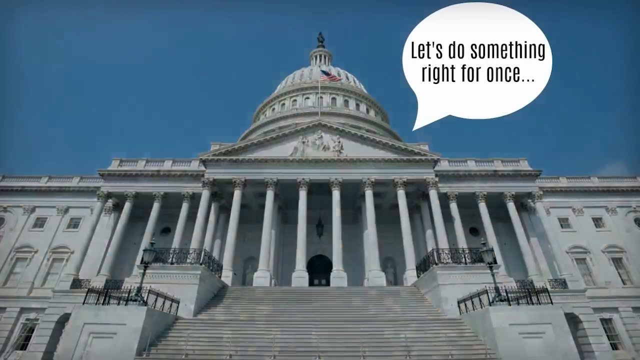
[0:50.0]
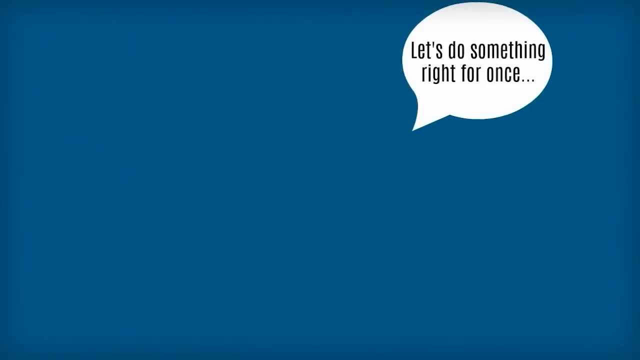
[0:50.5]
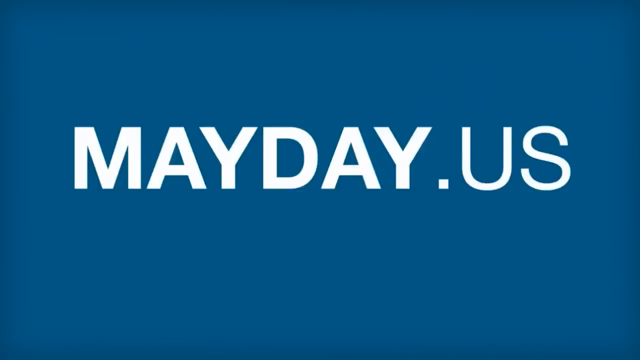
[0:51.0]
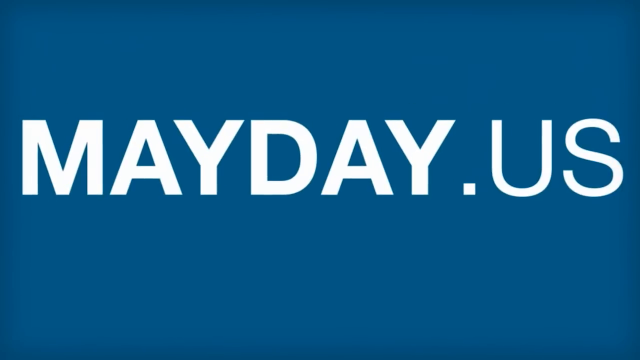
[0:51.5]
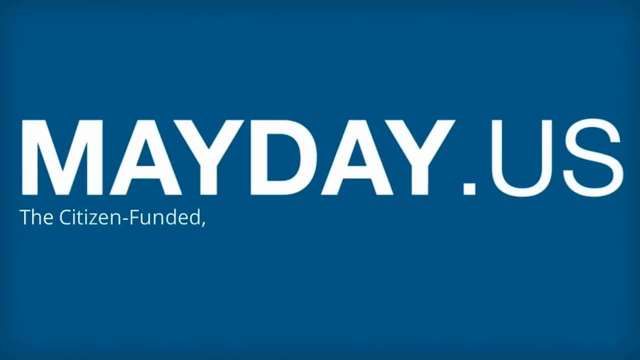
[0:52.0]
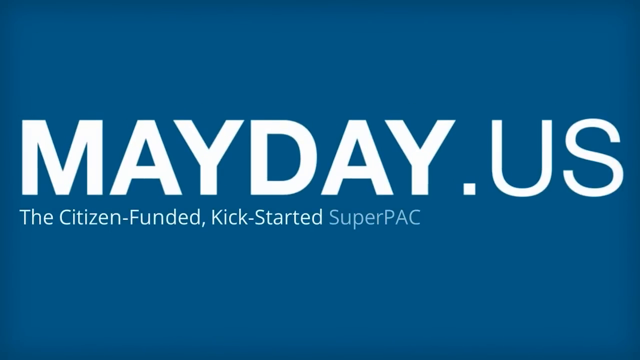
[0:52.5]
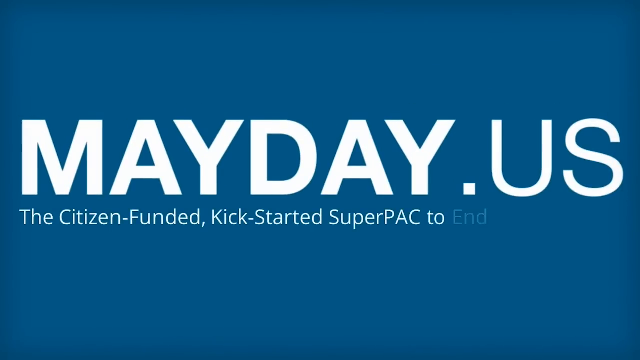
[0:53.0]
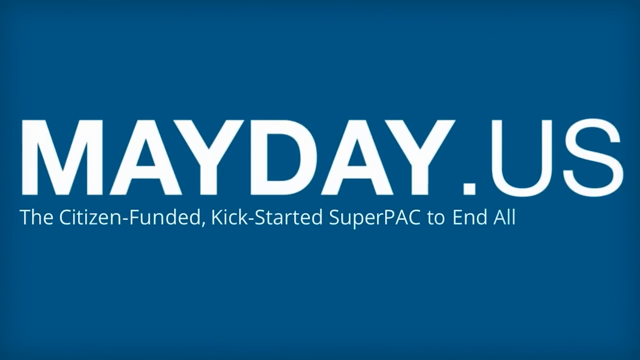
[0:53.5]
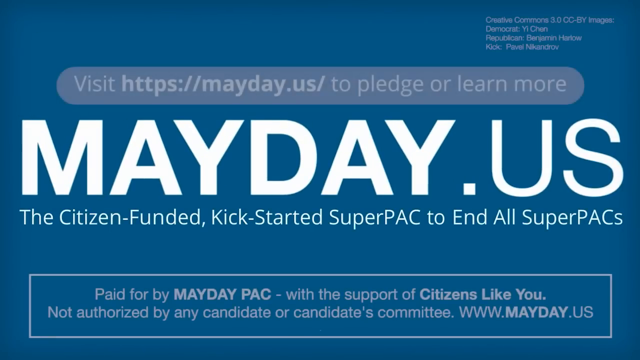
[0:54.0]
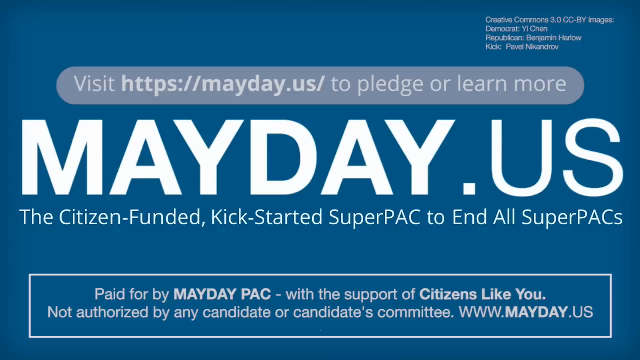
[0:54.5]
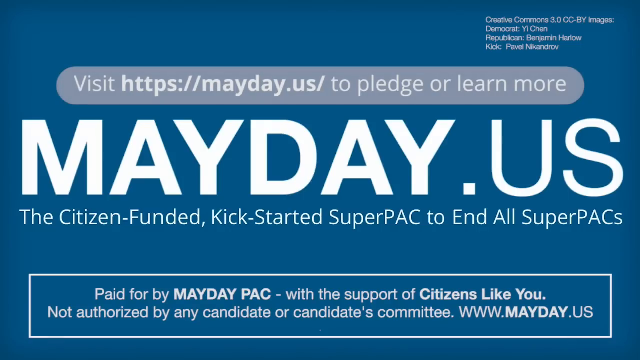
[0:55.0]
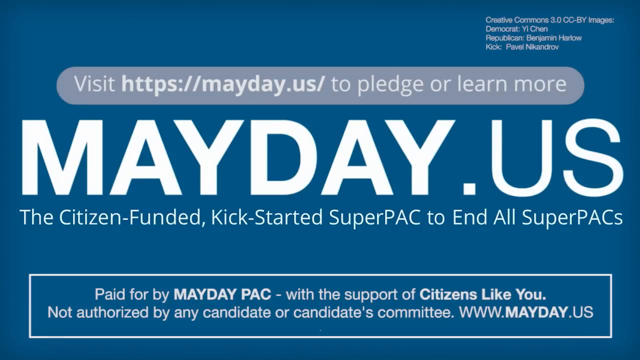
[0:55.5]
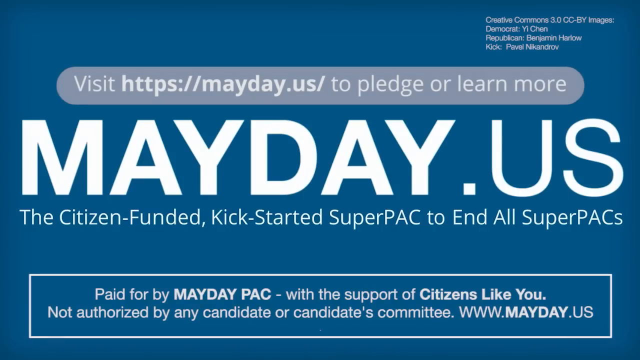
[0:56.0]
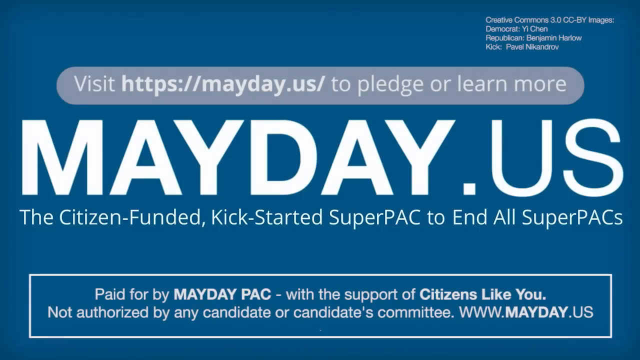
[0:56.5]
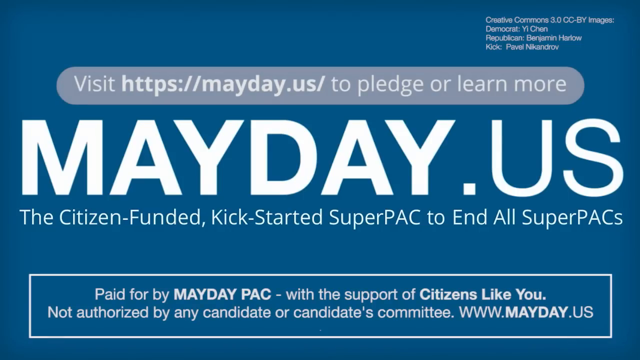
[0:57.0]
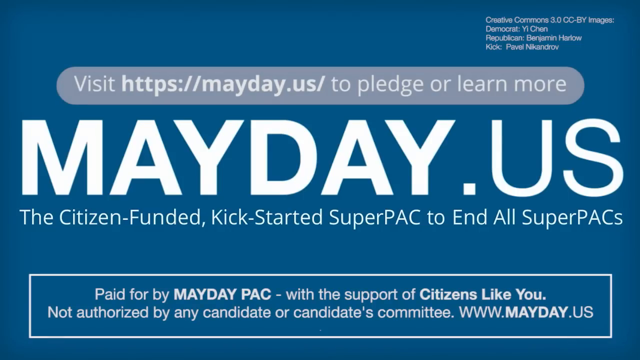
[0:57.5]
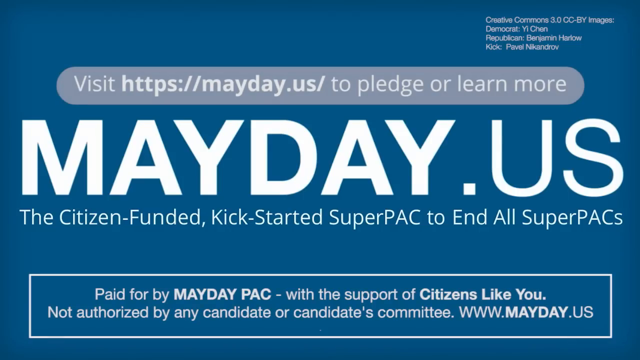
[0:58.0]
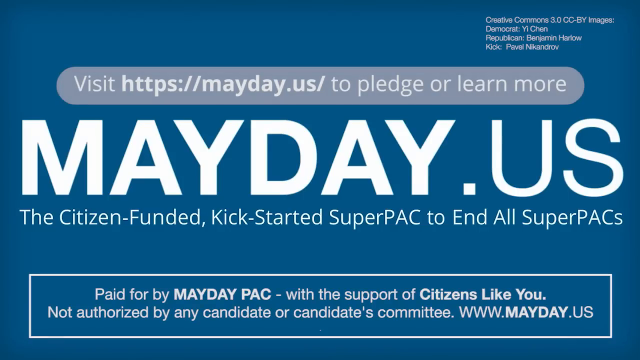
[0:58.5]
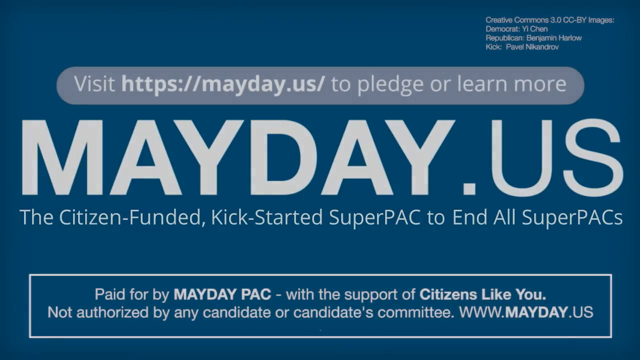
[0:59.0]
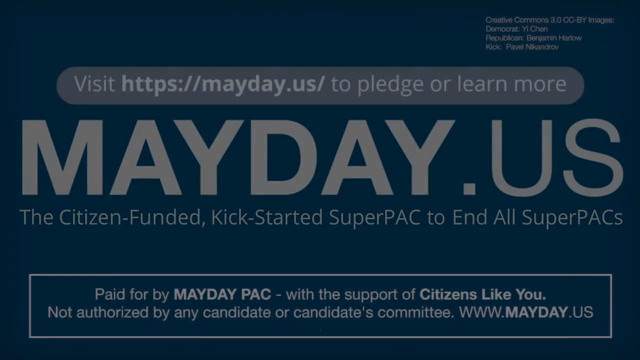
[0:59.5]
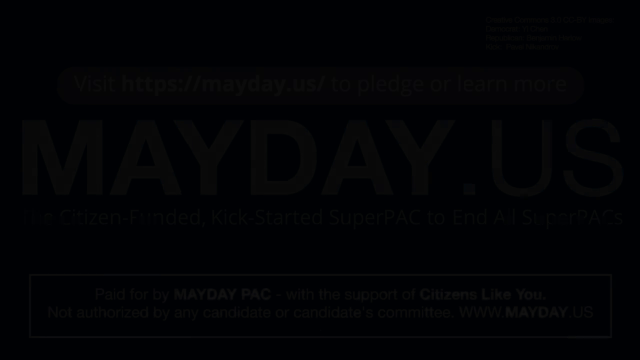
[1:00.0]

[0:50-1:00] The White House is shown saying "let's do it right once," and then different sites where people can go to vote are shown. The White House appears with text reading "the citizen funded kickstart super PAC to end all super PACs," followed by a web address ending in "the pledge" with the words "to learn more." Then text reads "paid for by Mayday PAC with the support of the citizens like you. Not authorized by any candidates or candidates committees," with a Mayday USA web address. It looks like a campaign for voting, and it seems very serious.